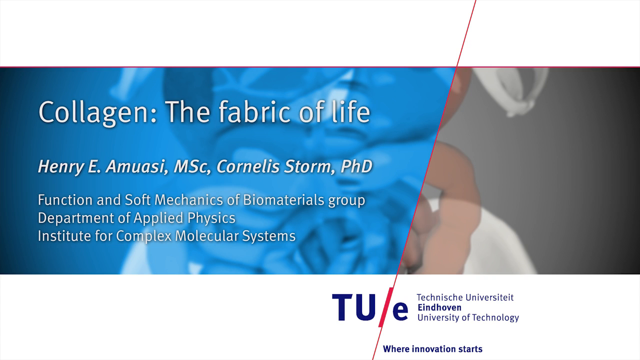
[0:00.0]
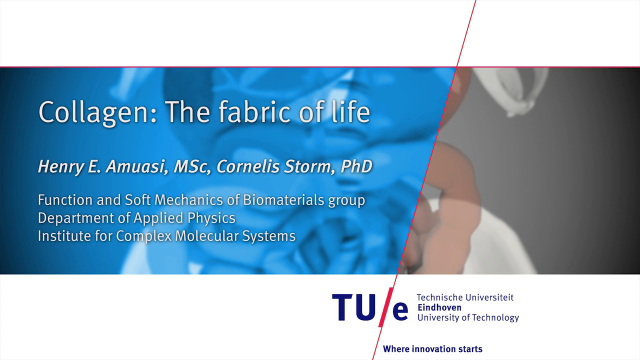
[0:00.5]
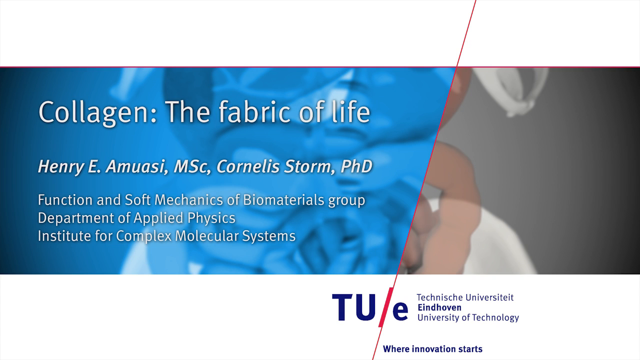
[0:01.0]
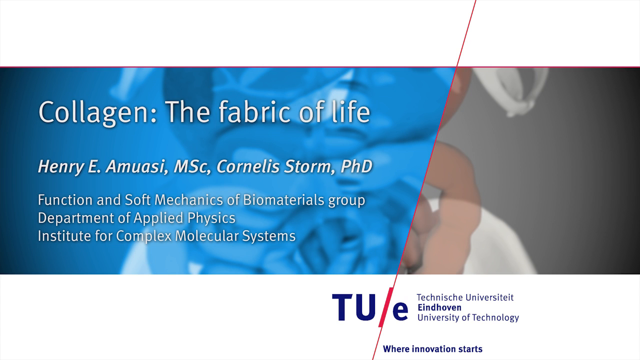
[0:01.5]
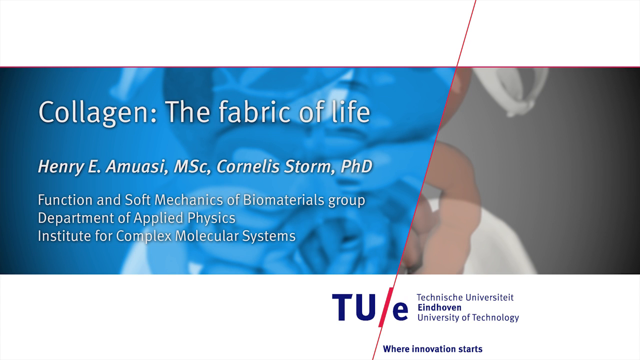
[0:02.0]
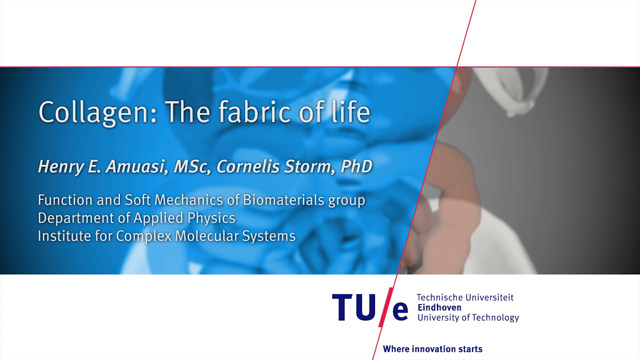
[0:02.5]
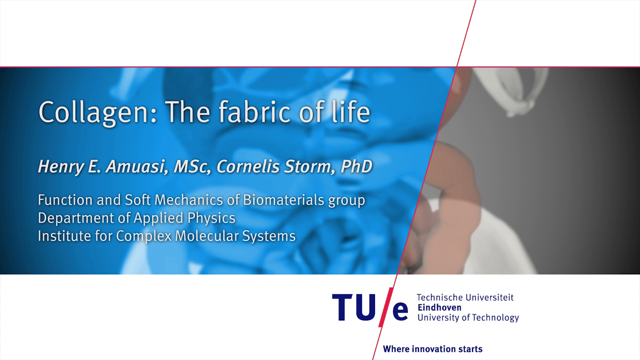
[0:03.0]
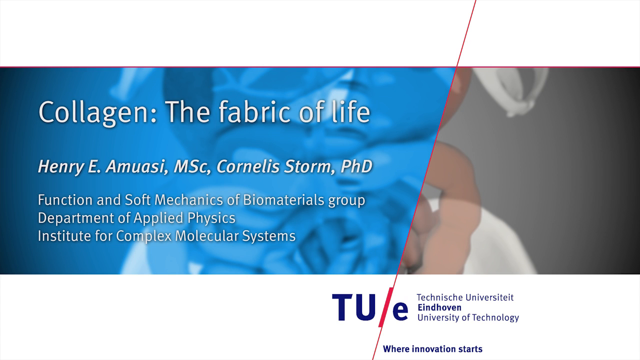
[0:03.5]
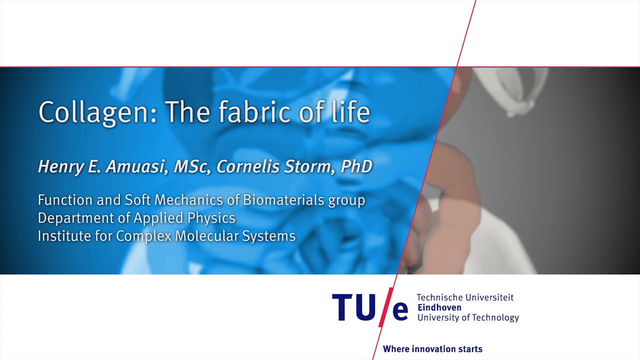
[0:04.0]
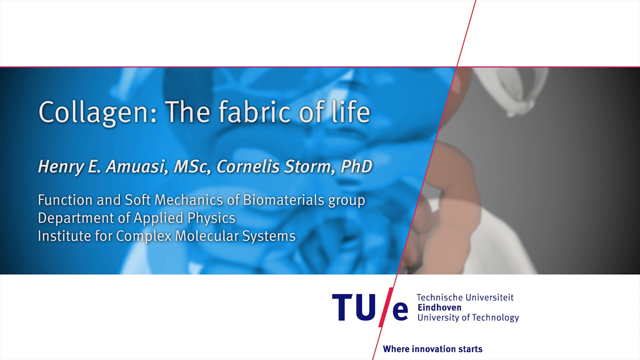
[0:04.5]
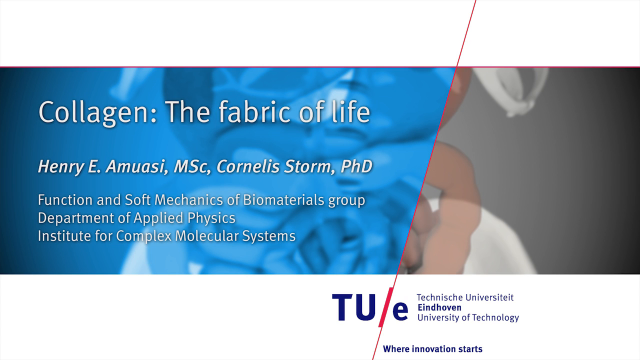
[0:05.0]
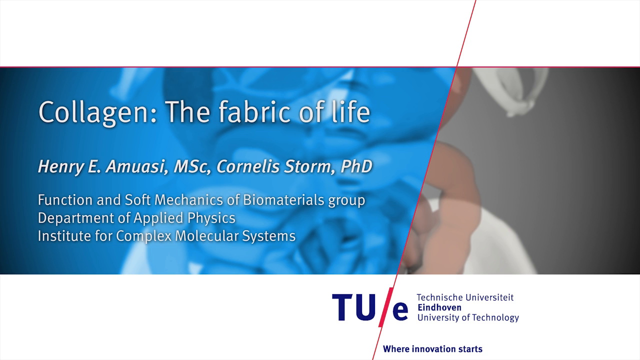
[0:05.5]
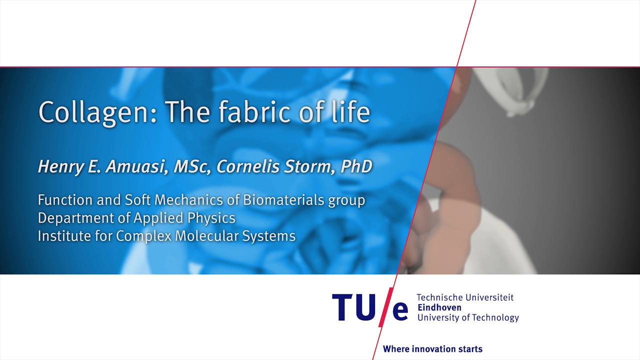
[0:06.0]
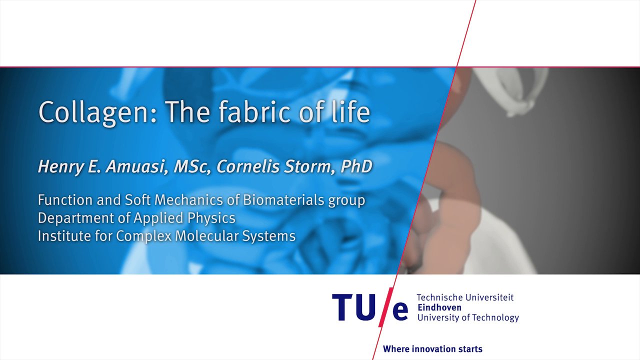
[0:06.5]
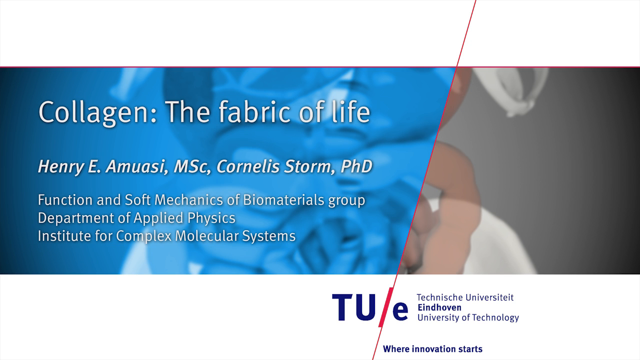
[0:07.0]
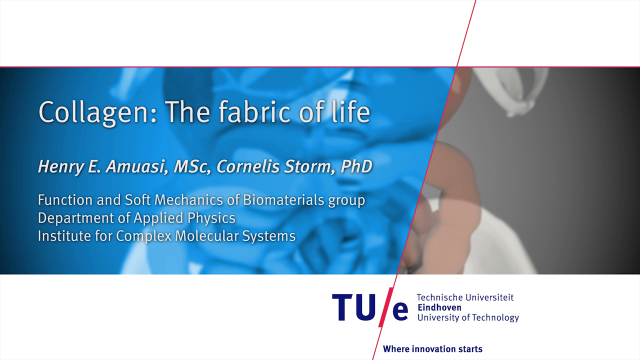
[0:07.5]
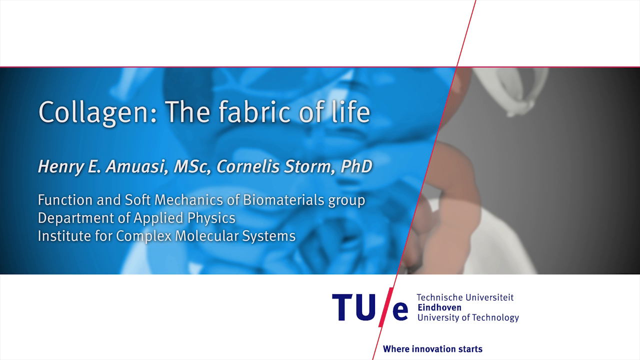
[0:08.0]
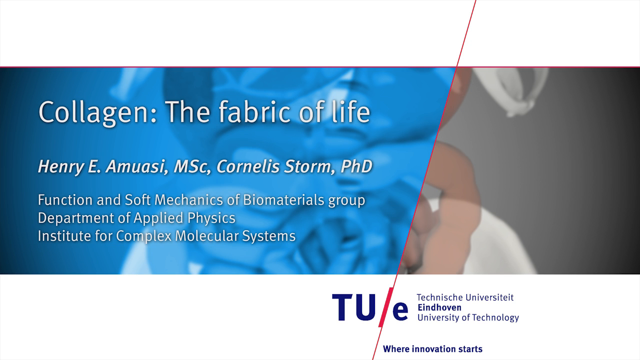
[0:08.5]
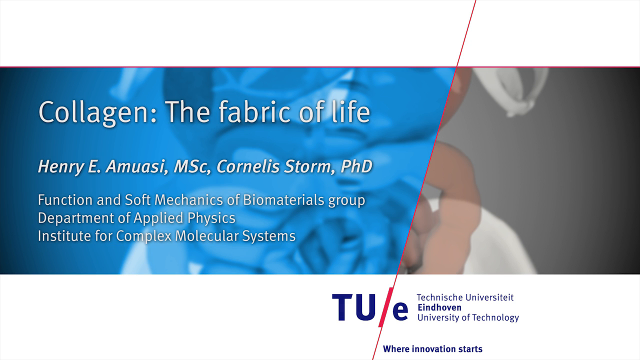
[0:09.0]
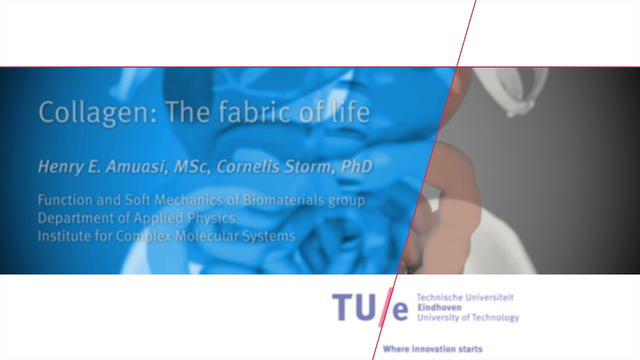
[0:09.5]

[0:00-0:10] The video opens on what looks like a title screen divided by a diagonal red line, with the left side blue and the right side gray, and a white border at the top and the bottom. On the left side, white text reads "Collagen, the Fabric of Life, Henry E. Amuasi, MSc, Cornelis Storm, PhD, Function and Soft Mechanisms of Biomaterials Group, Department of Applied Physics, Institute for Complex Molecular Systems". At the bottom right, blue text in the white banner reads "TUE Technische Universität" and "University of Technology, where innovation starts". Behind the blue and gray background there is an image of what looks like small intestines and stomachs in a light pink color, tinted blue behind the blue area. Nothing else happens on the screen; the white and blue text start to fade out.